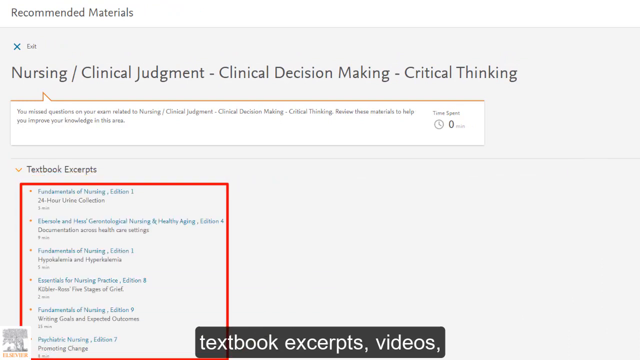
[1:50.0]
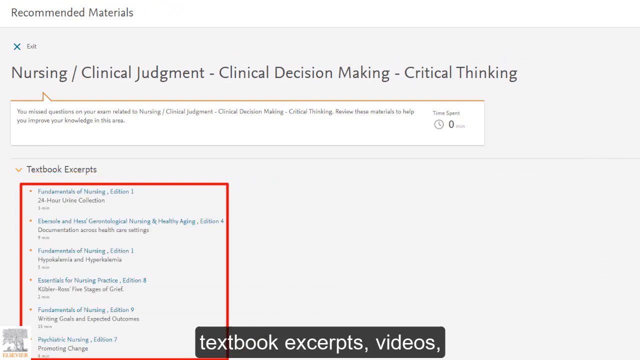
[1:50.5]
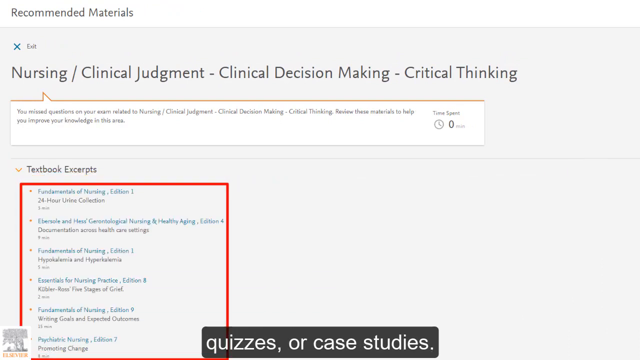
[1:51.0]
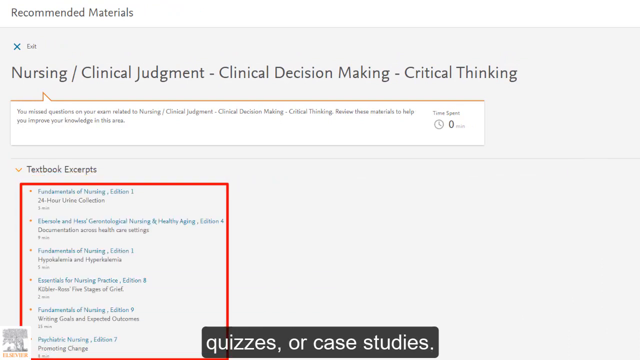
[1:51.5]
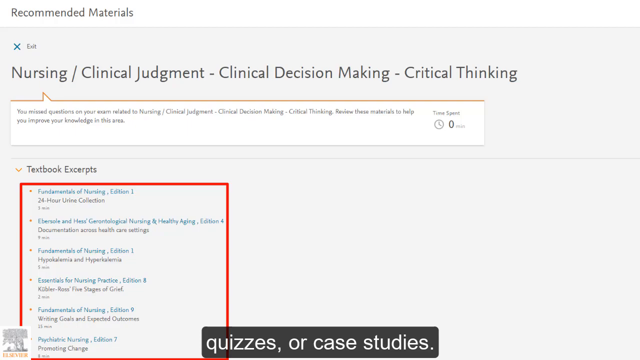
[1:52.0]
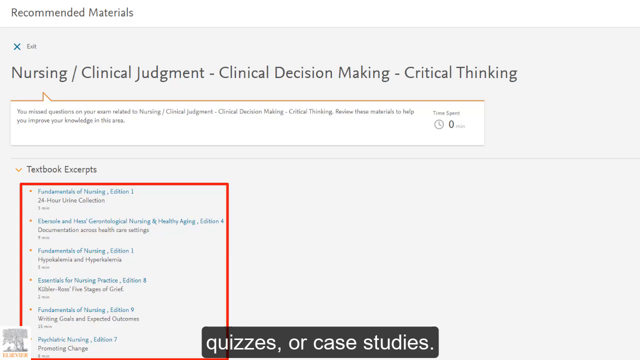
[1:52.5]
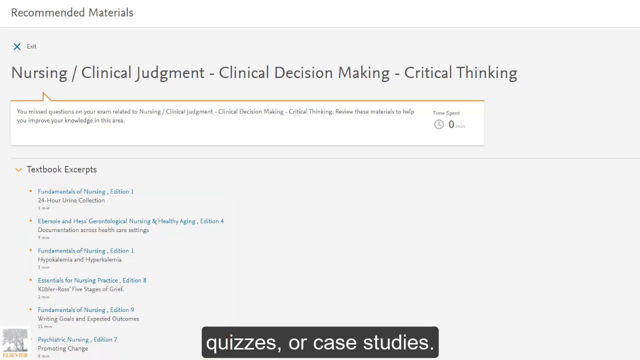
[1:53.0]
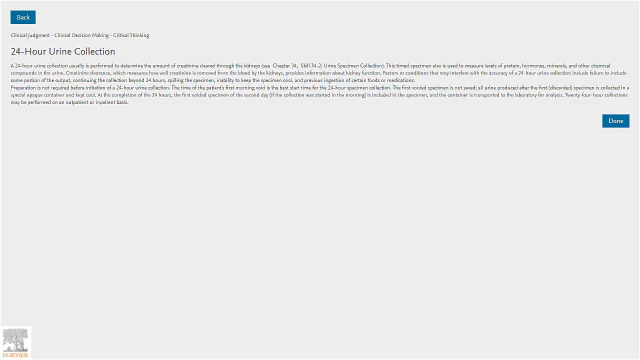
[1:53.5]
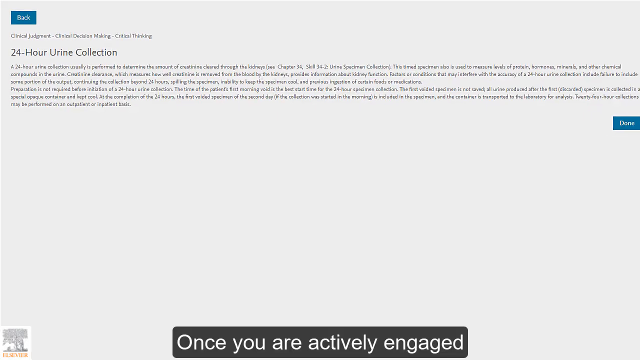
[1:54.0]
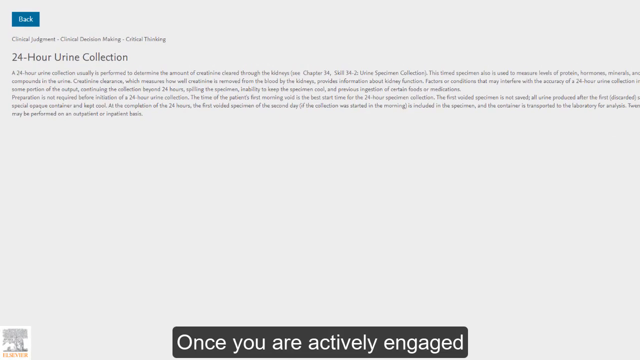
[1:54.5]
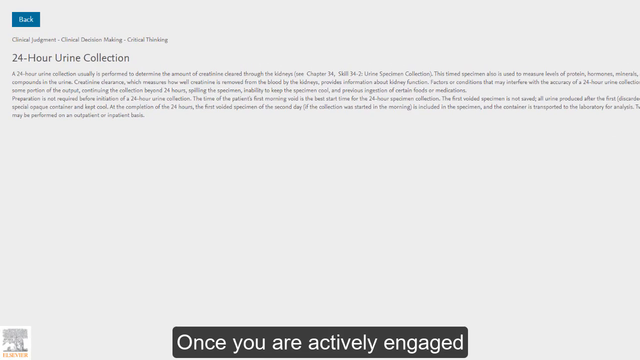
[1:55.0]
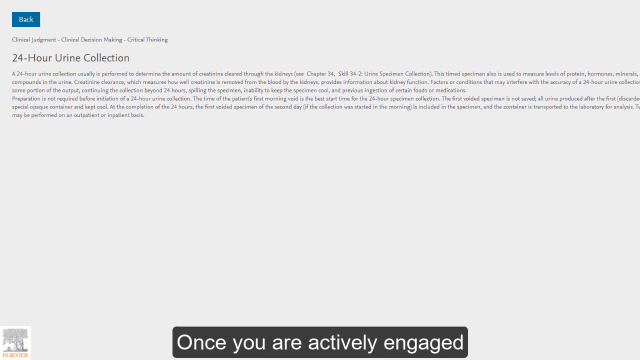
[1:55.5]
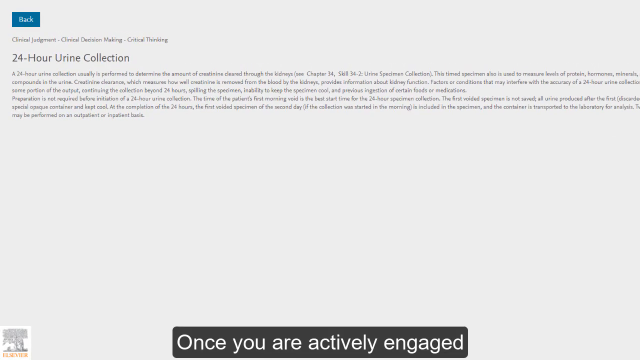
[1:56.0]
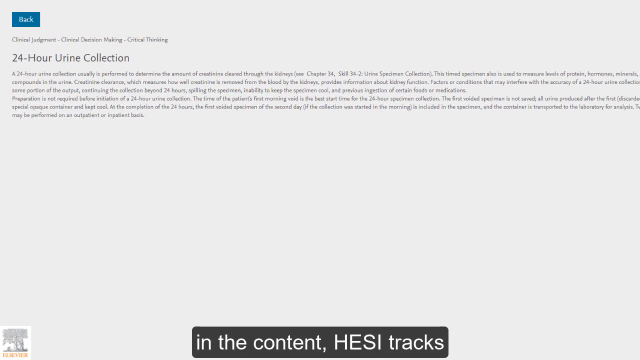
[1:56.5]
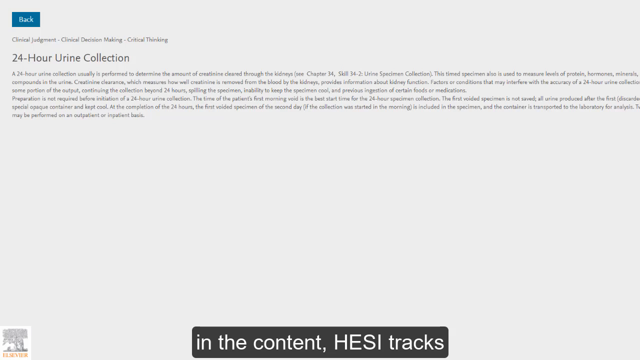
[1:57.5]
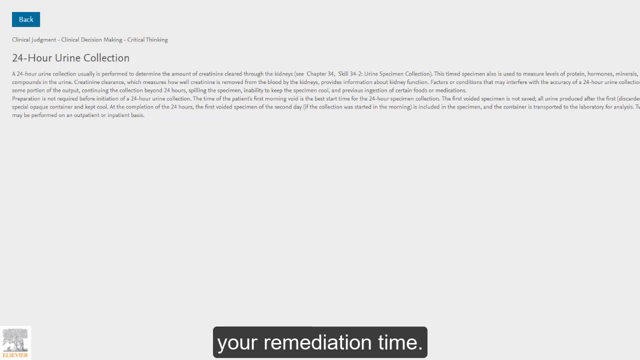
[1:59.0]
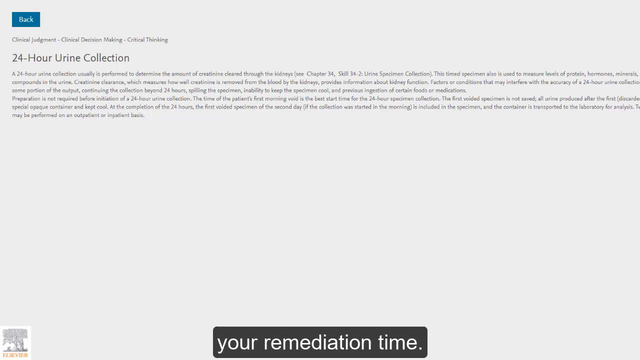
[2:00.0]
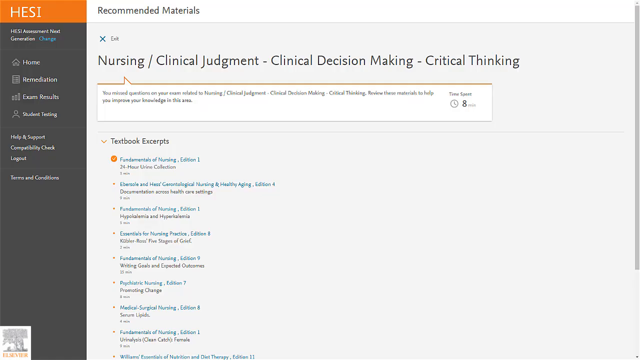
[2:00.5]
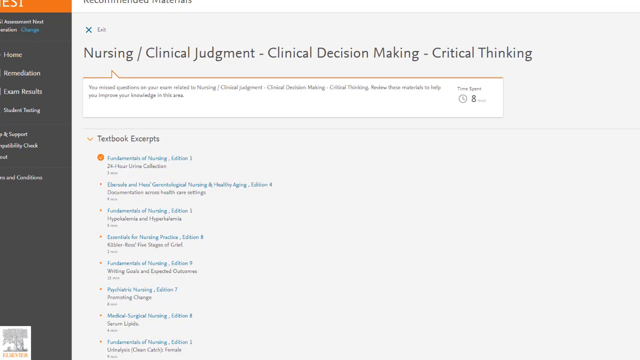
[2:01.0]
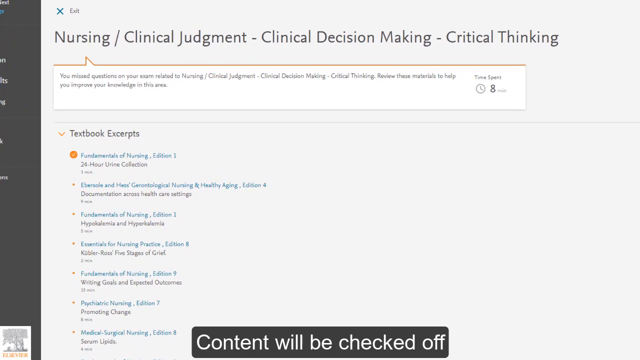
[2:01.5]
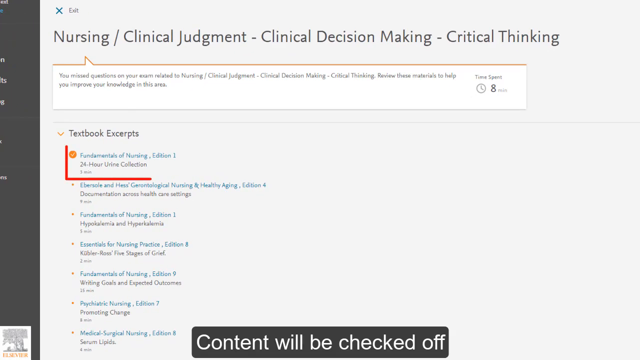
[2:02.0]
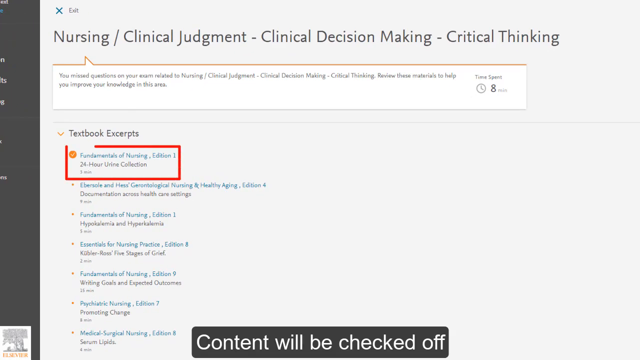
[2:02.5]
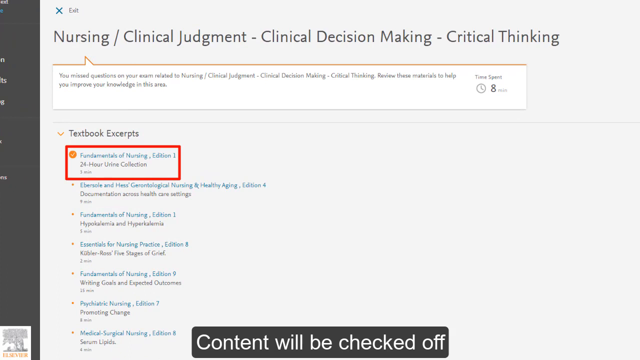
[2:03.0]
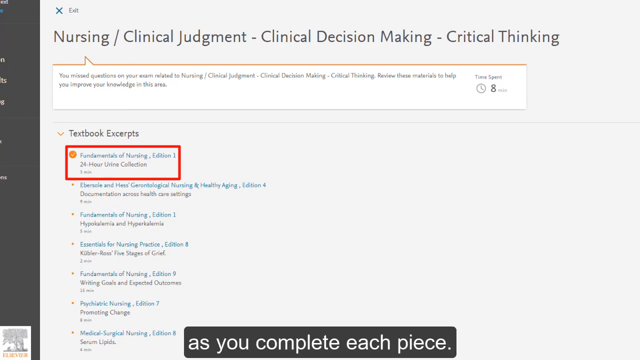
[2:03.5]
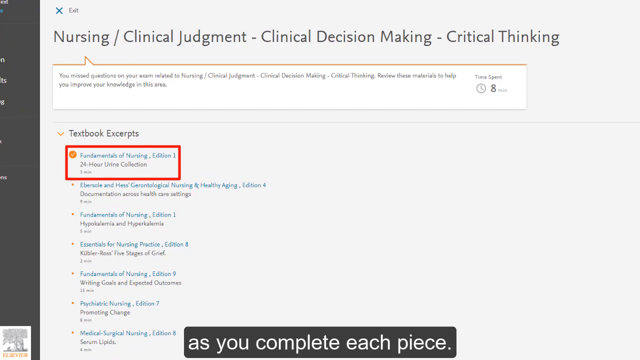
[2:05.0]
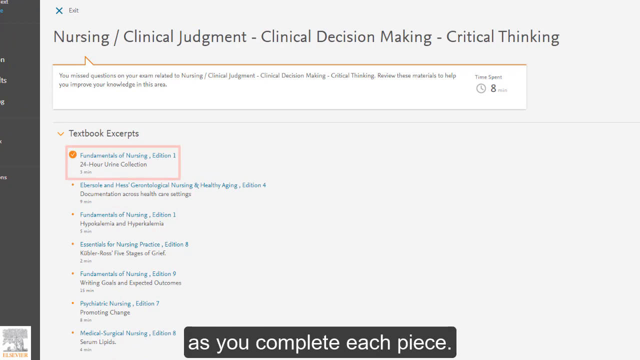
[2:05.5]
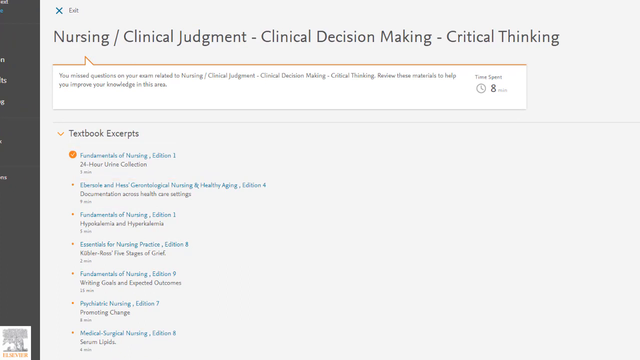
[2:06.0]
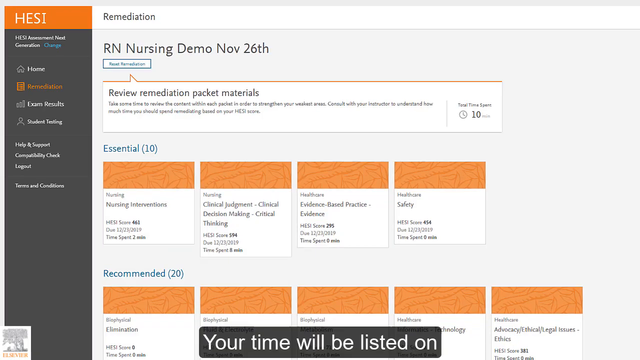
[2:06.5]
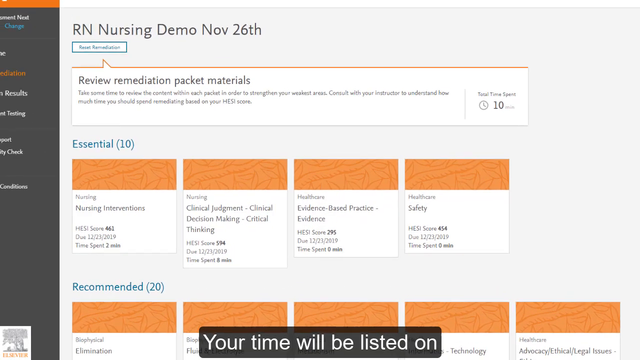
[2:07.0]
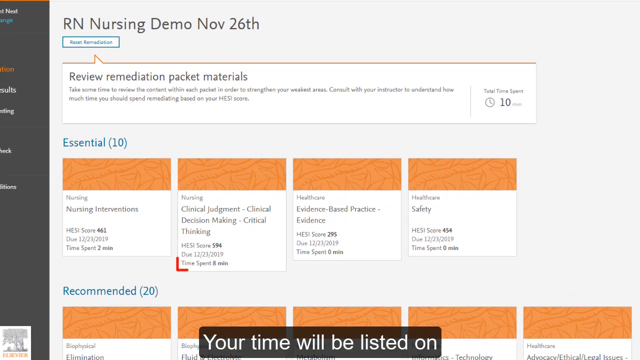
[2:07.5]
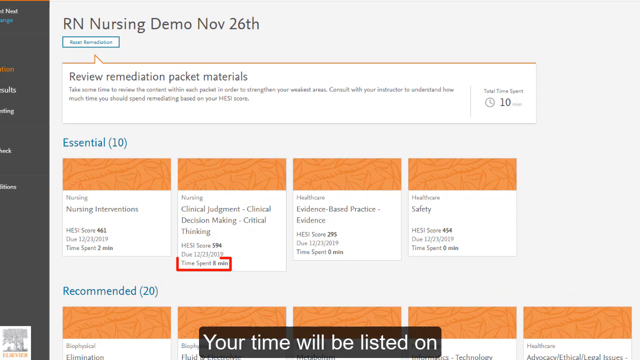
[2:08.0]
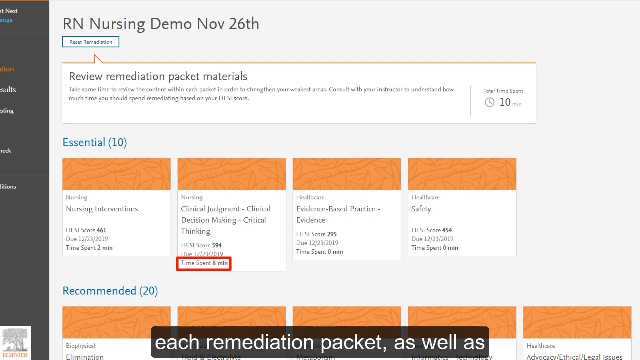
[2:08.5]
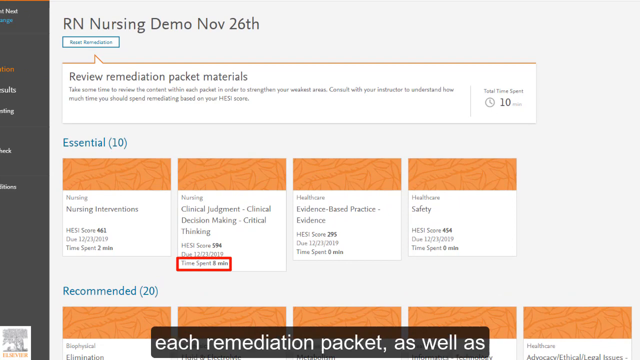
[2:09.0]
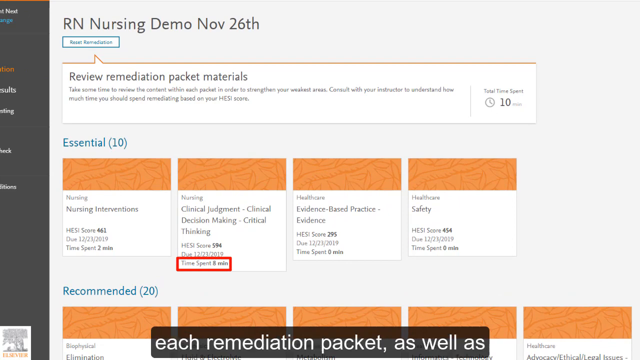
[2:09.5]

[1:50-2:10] The HESI remediation package site shows the recommended subject, nursing clinical judgment, with the text "You missed questions on your exam related to nursing, clinical judgment, clinical decision making, critical thinking, review these materials to help you improve your knowledge in this area." Listed are textbook excerpts including "Fundamentals of Nursing, Edition 1," "24 hour collection," "documentation across healthcare settings" and "hypokalemia and hyperkalemia, edition one," along with textbook, quizzes or case studies. Text reads "Once you are actively engaged in the content, HESI tracks your remediation time. Content will be checked off as you complete each piece." The next slide shows a write-up on 24-hour urine collection: "A 24-hour urine collection usually is performed to determine the amount of contamination cleared through the kidneys. See chapter 34. This timed specimen also is used to measure levels of protein, hormones, minerals compound in the urine."